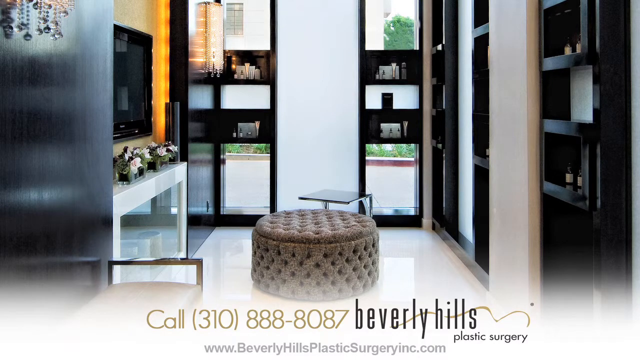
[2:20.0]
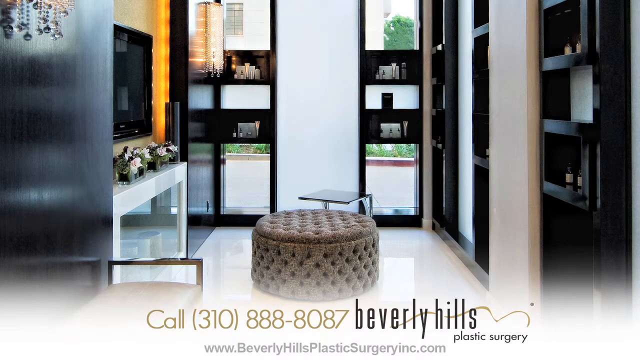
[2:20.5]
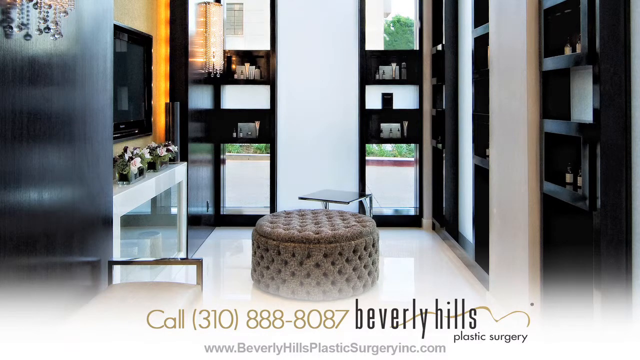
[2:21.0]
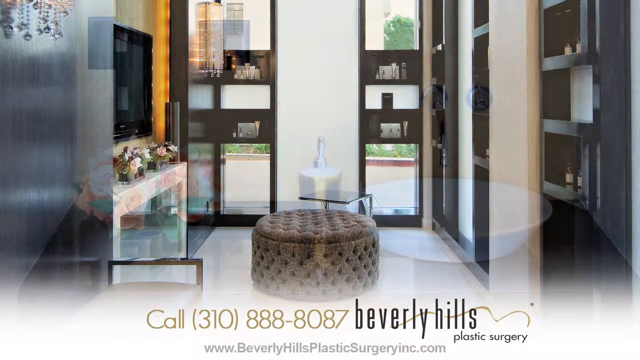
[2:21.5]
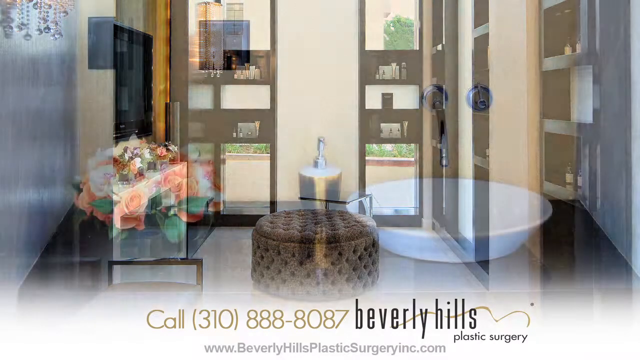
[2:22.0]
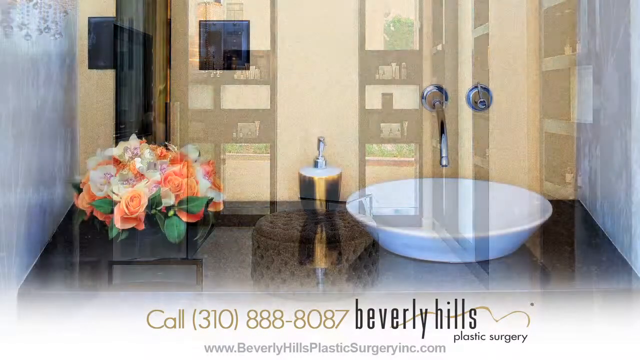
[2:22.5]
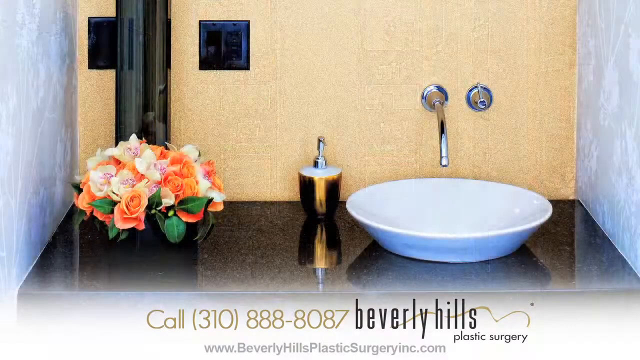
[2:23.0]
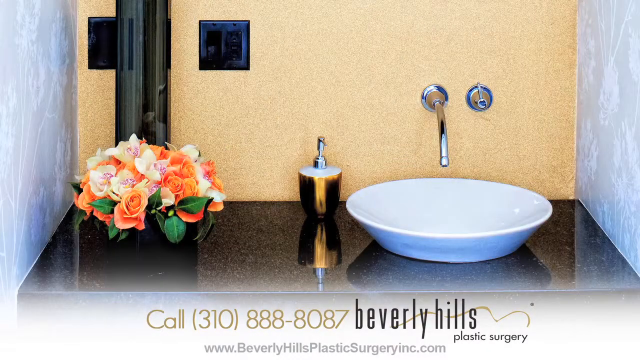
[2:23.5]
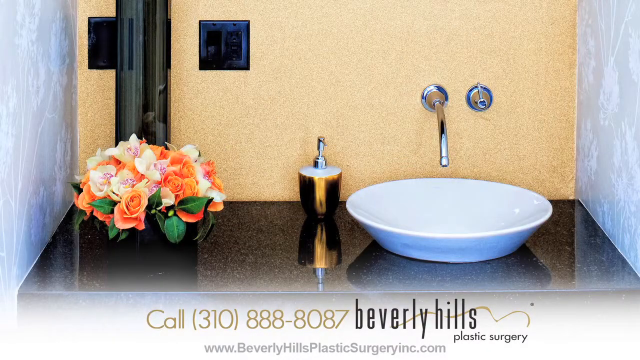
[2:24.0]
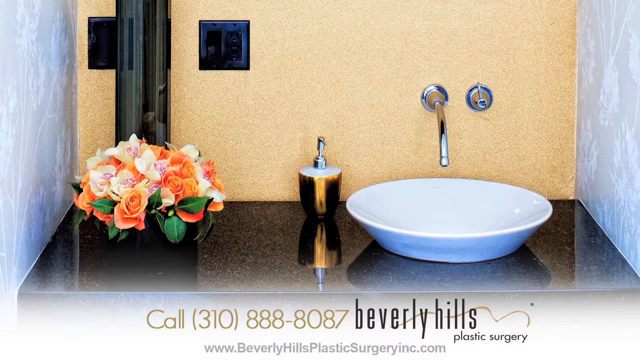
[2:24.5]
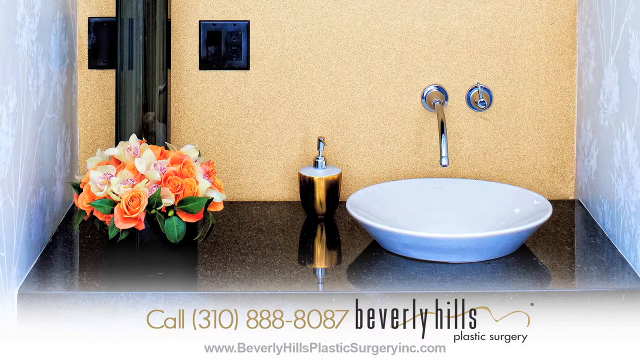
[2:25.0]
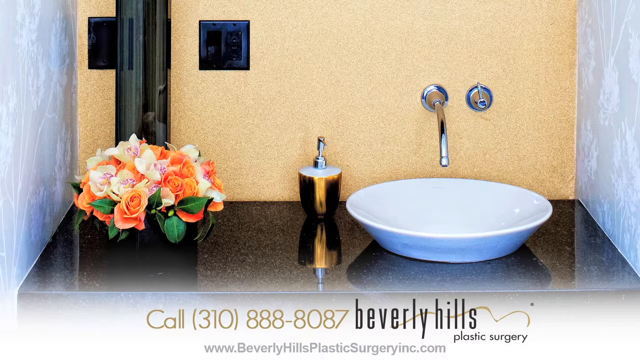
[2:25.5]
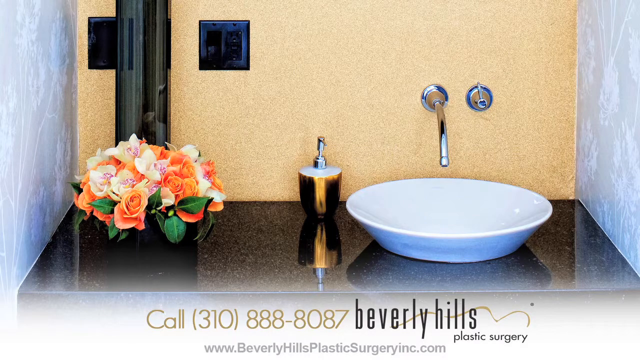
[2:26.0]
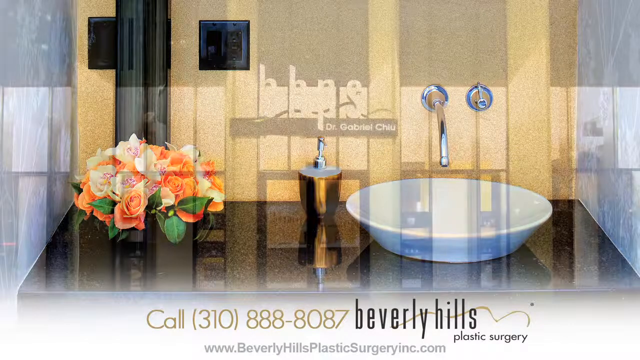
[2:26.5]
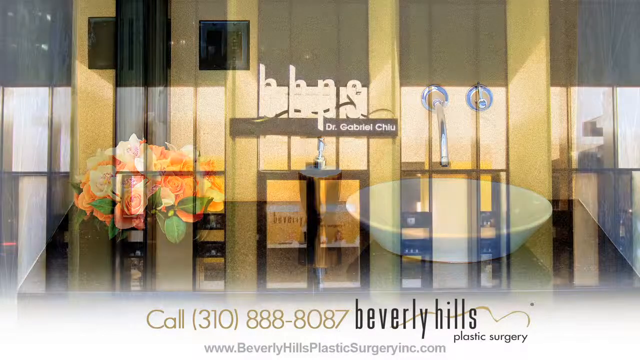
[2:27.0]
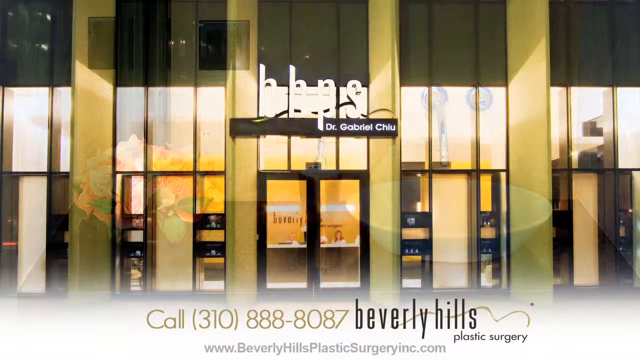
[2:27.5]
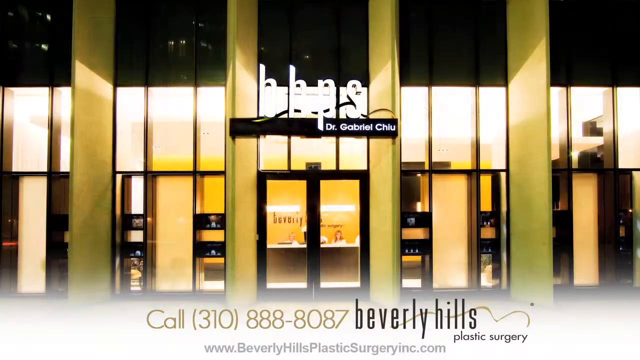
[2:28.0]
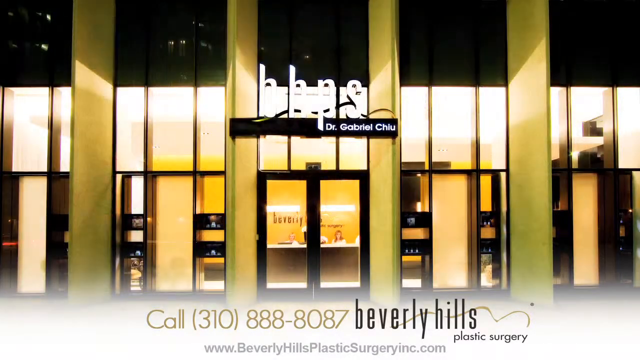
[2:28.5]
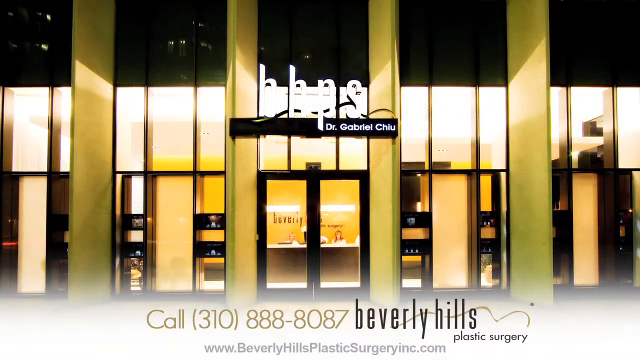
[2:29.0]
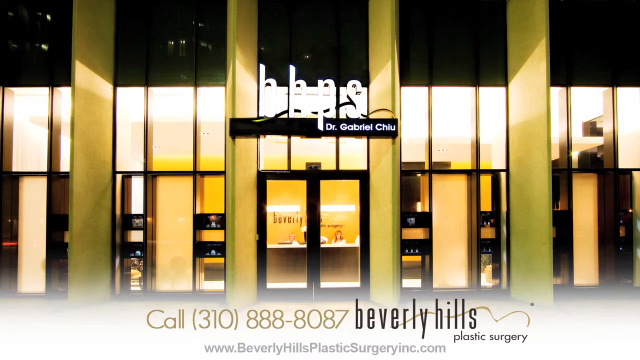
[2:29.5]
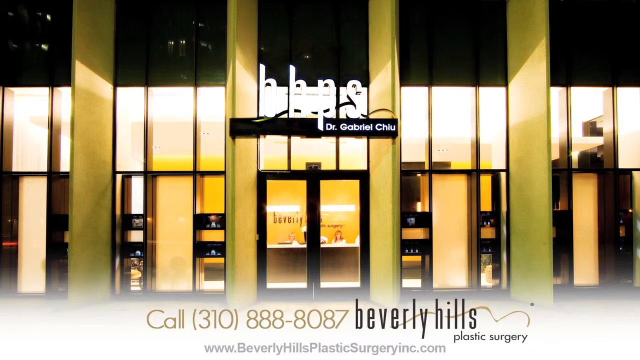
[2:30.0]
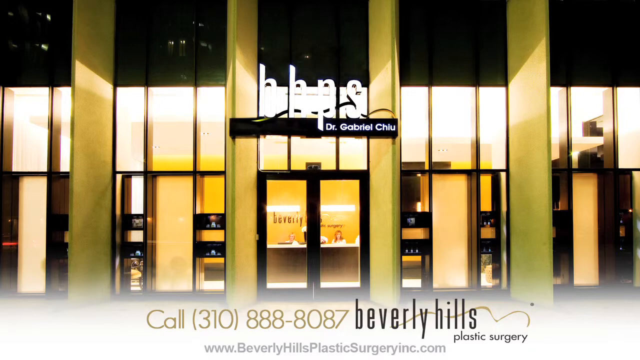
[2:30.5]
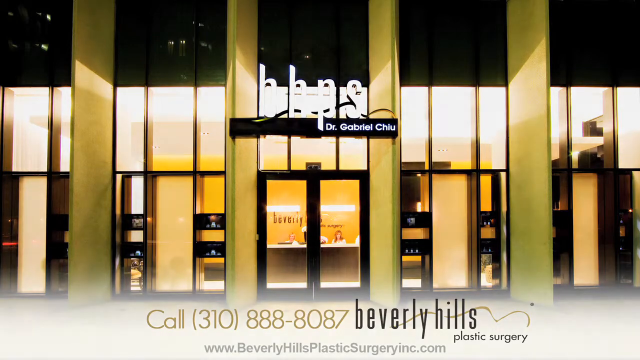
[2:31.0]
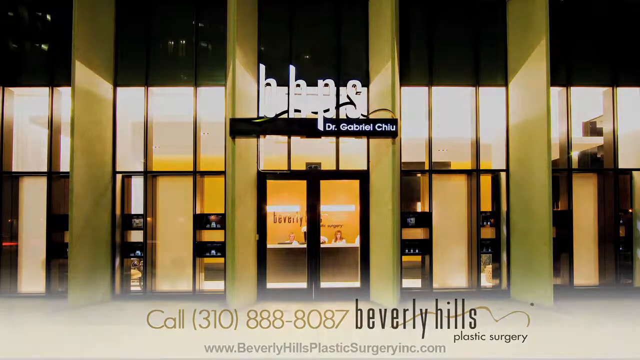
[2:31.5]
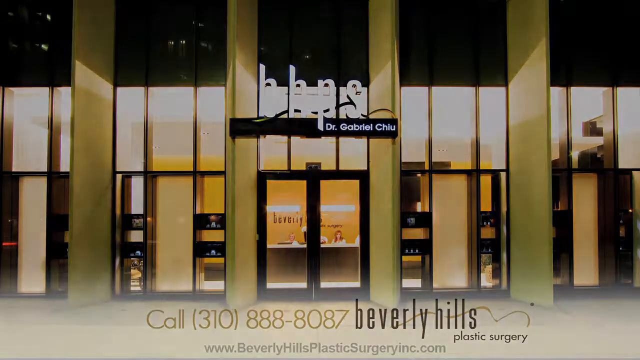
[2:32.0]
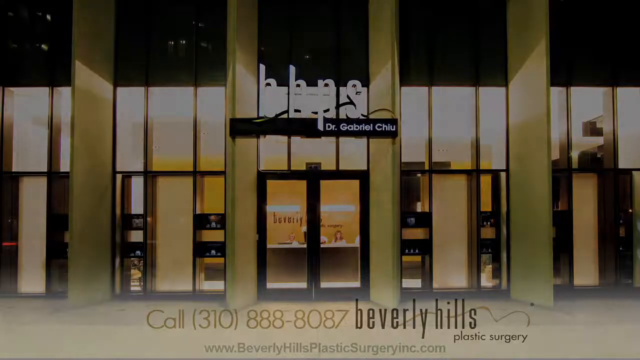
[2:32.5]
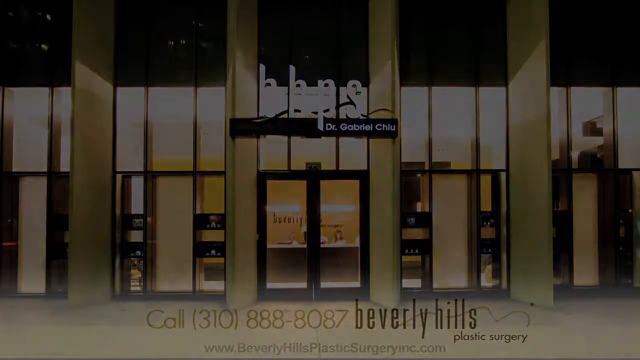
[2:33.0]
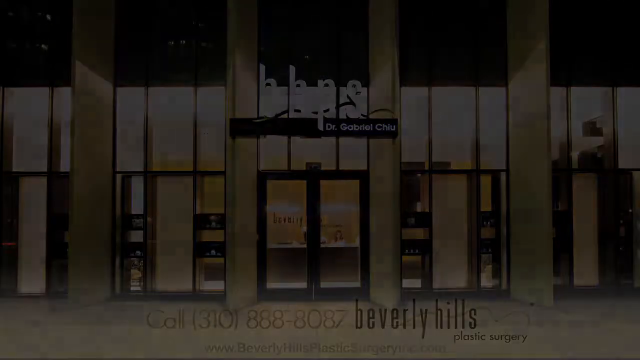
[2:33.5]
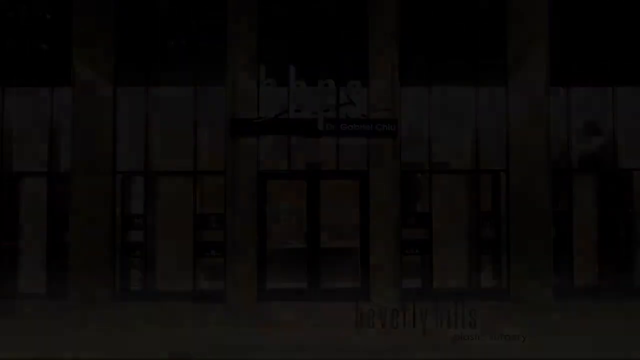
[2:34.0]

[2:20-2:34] The same room is shown, and the slideshow moves to a photo of a sink with a tap coming out of a yellow wall, with black switches on the wall. A small bouquet of flowers is to the left, and a soap dispenser is in the middle of the sink station. The final shot shows the outside of the whole building, seemingly at night, with lights illuminating from inside.